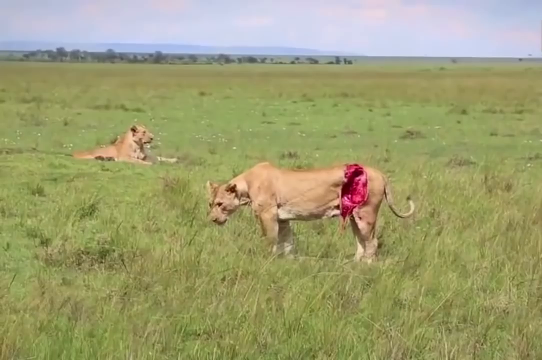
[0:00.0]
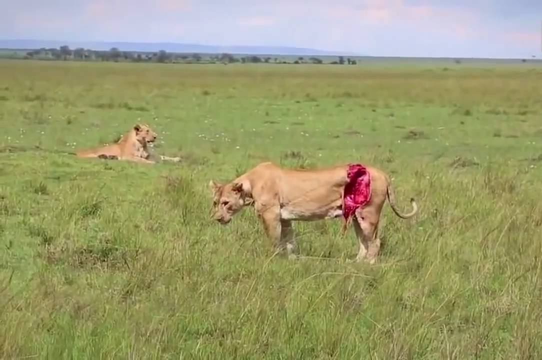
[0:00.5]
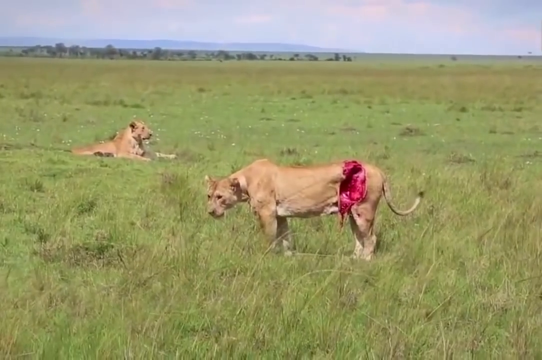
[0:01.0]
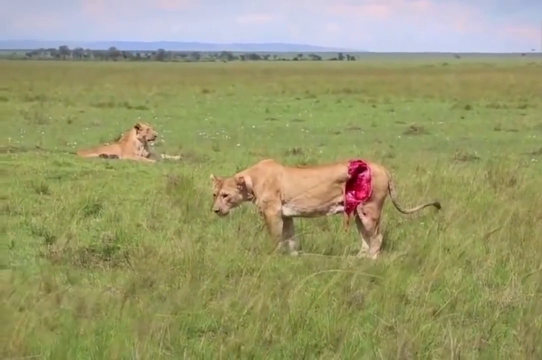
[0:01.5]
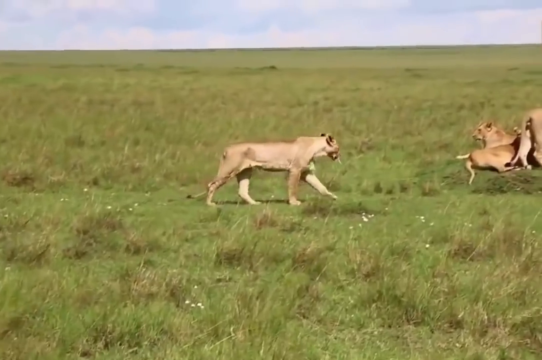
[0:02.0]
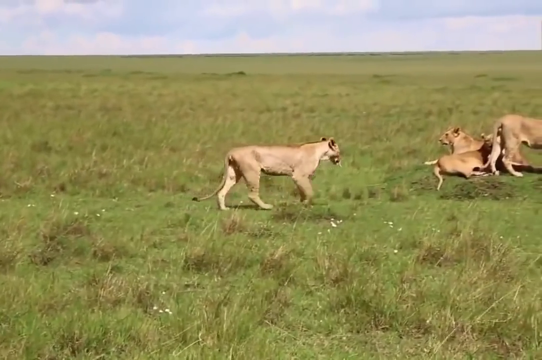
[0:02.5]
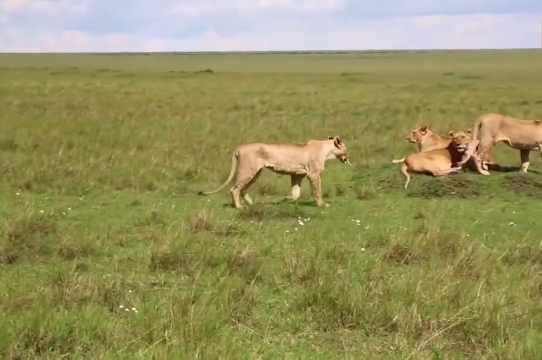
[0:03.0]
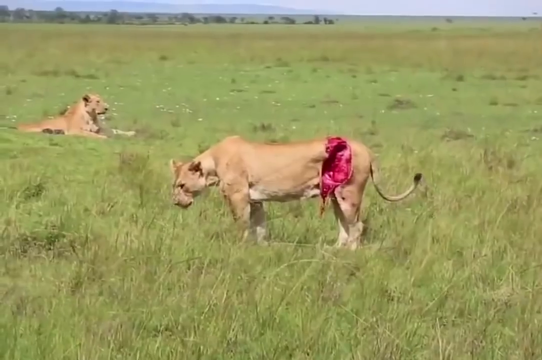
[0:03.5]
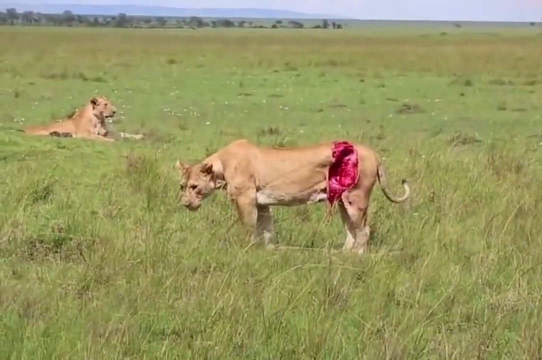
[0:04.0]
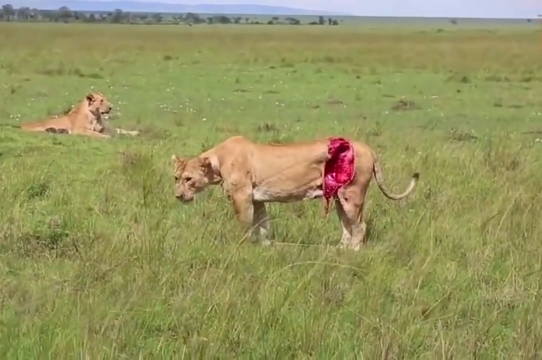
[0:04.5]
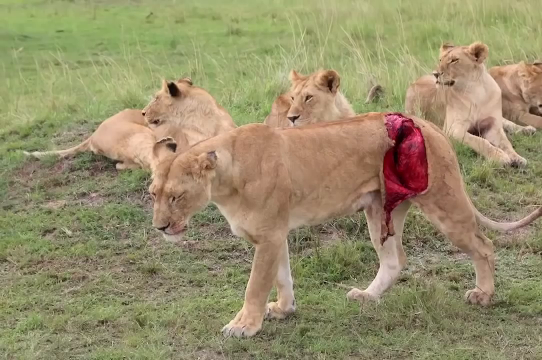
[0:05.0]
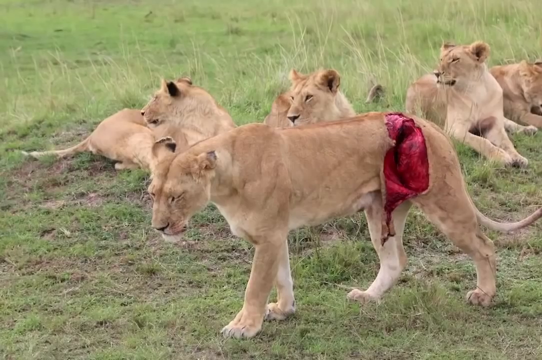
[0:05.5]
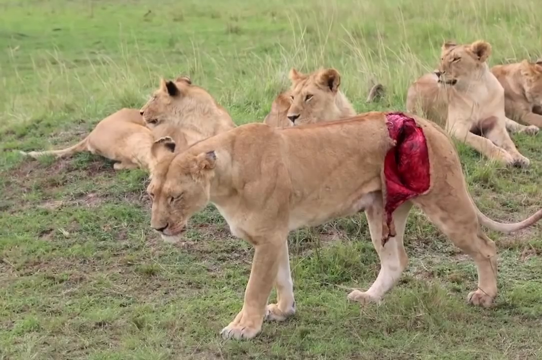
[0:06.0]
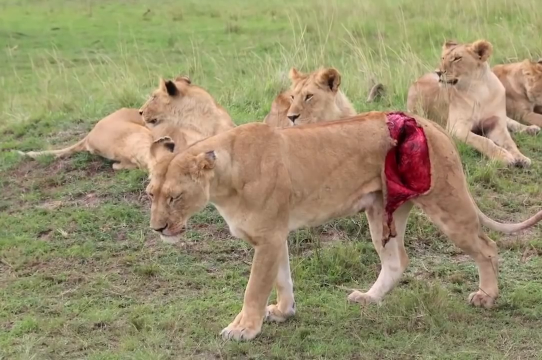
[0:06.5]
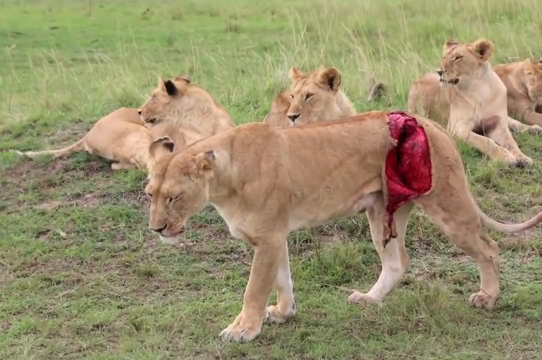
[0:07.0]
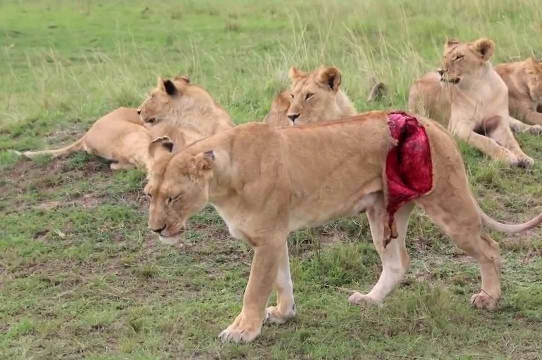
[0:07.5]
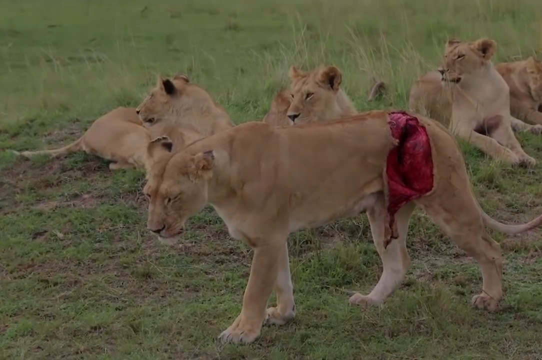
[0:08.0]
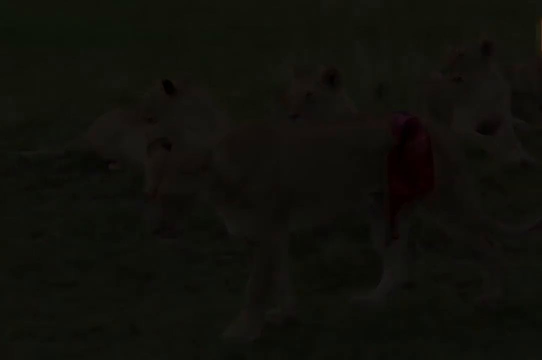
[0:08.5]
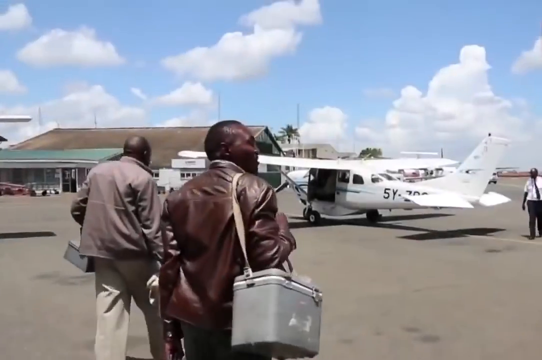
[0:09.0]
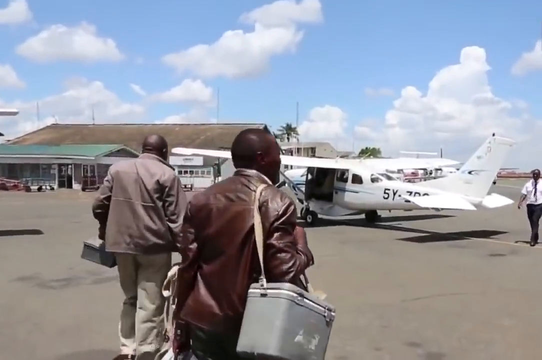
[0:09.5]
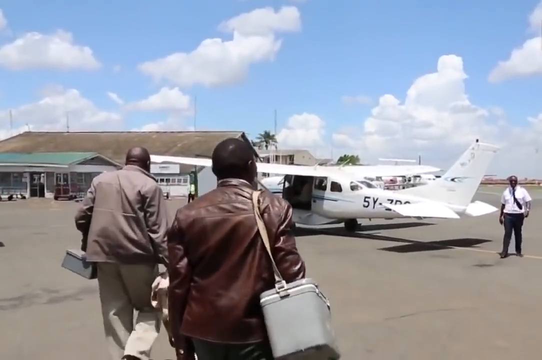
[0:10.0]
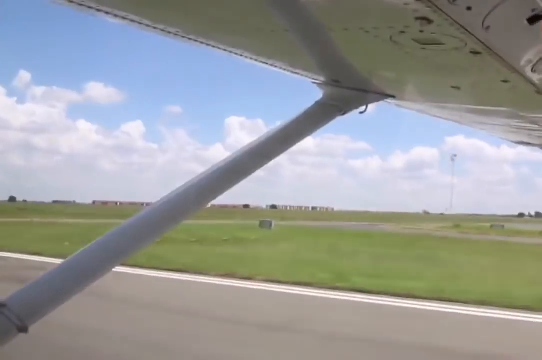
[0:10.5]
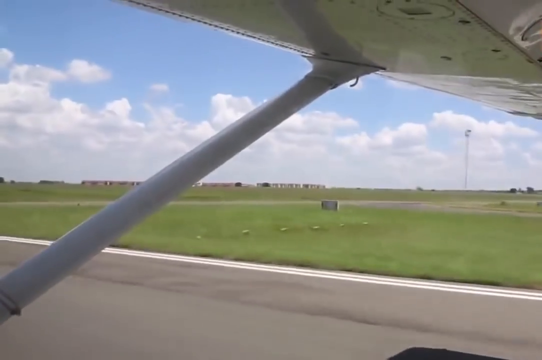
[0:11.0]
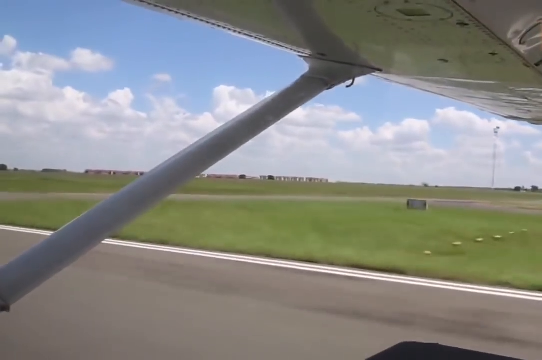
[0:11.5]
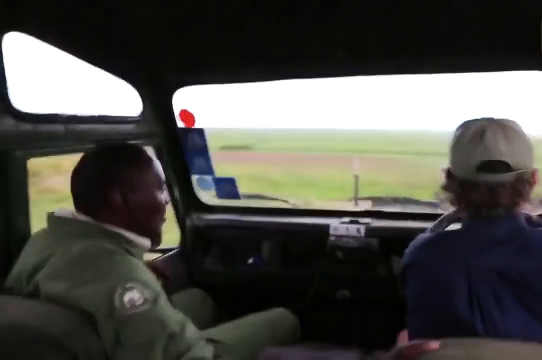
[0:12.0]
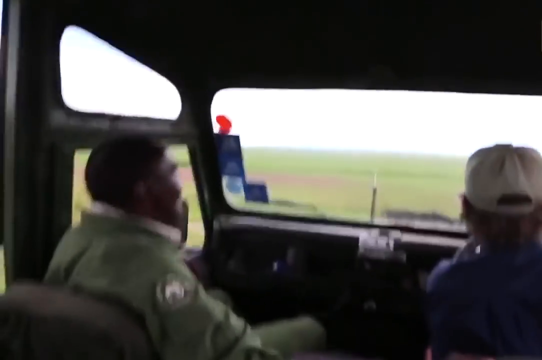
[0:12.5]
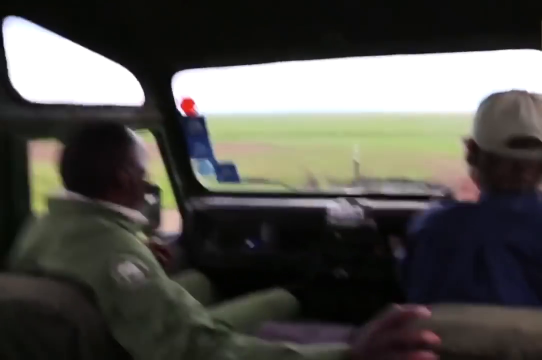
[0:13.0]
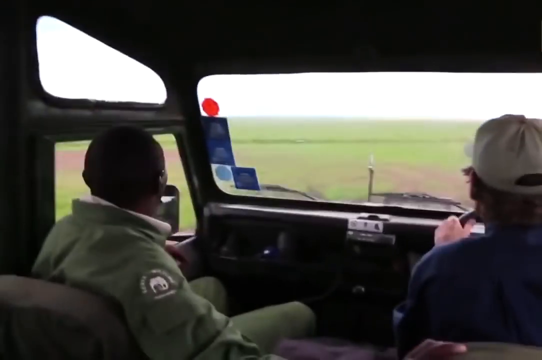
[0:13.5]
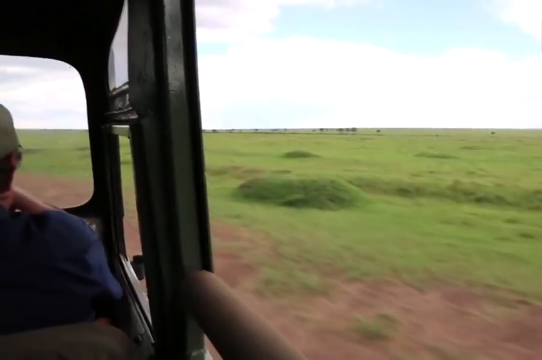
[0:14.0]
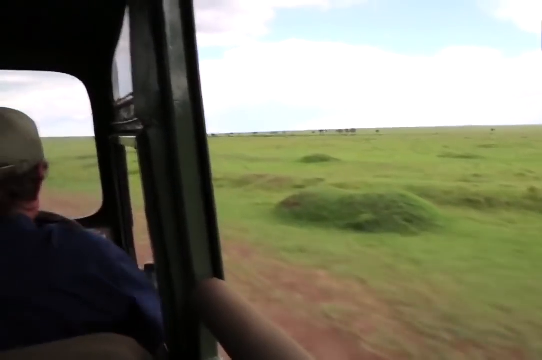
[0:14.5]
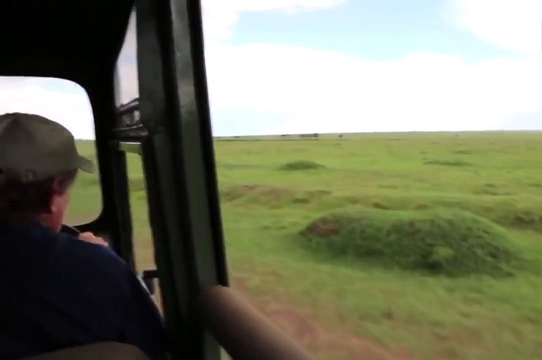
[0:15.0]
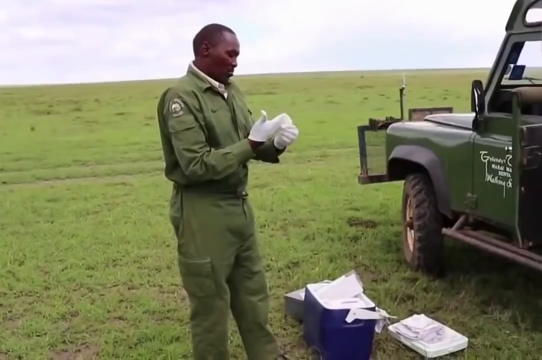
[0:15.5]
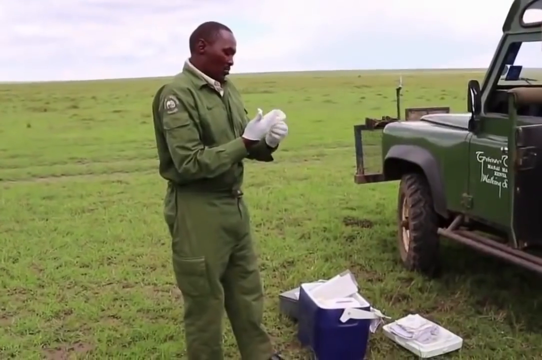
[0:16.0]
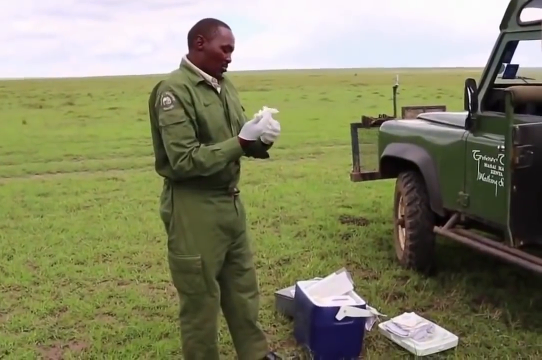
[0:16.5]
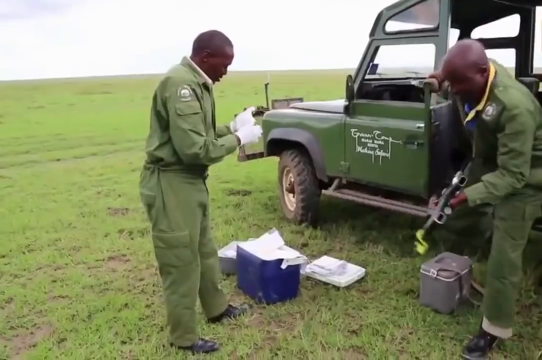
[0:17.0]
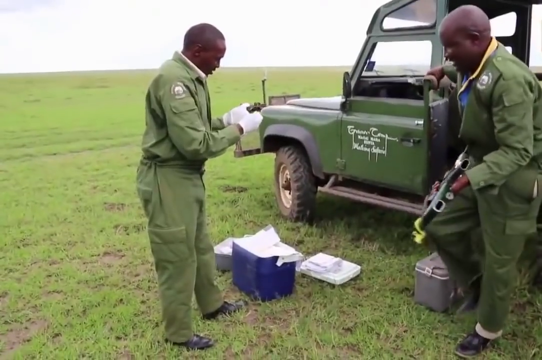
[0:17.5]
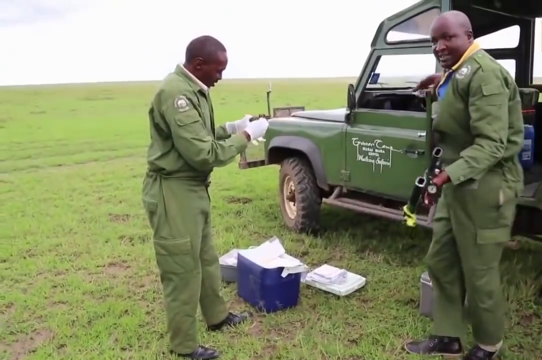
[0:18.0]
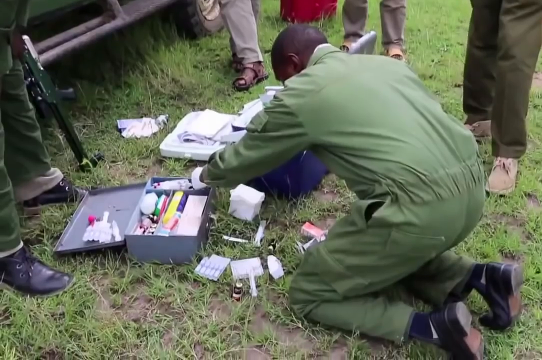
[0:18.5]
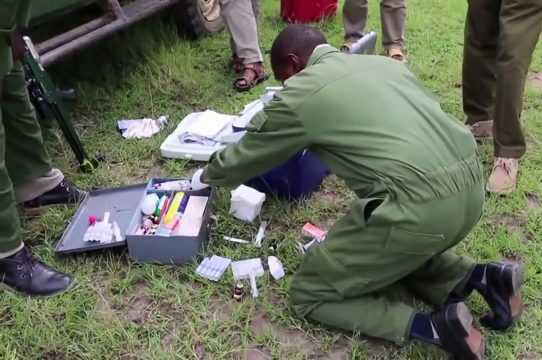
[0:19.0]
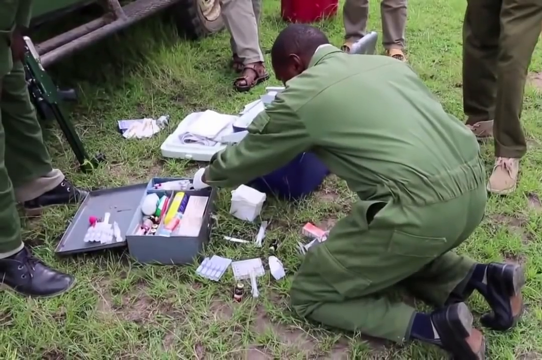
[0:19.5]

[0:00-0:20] A group of lions lies on green grass; the whole environment and background are very green. One lion is standing, and that lion is wounded, with a wound showing red patches of color. The scene then moves to a team of two men carrying some boxes as they enter a white airplane. They are then taken to a field, where they put on gloves and wear green uniforms. The boxes are opened, revealing many things inside, and other people stand beside the car. One man holds some items and is lying down. There is a green car, and men in green uniforms with other people surrounding them.